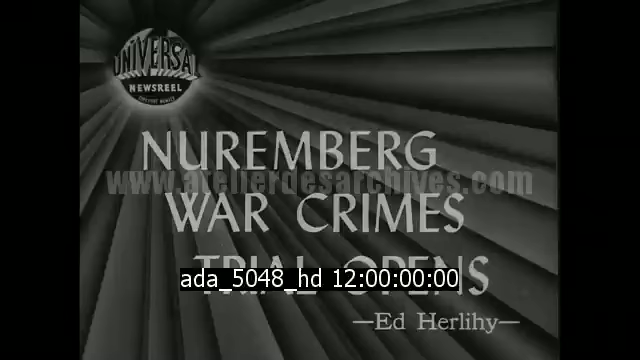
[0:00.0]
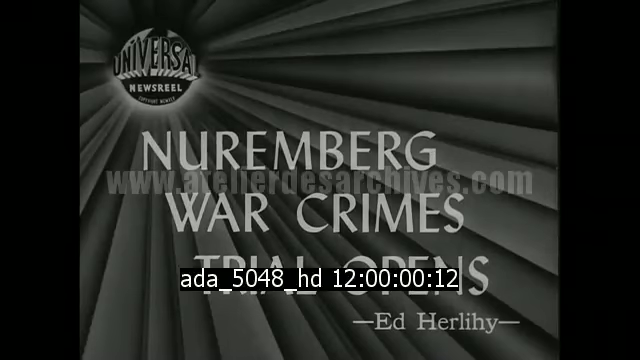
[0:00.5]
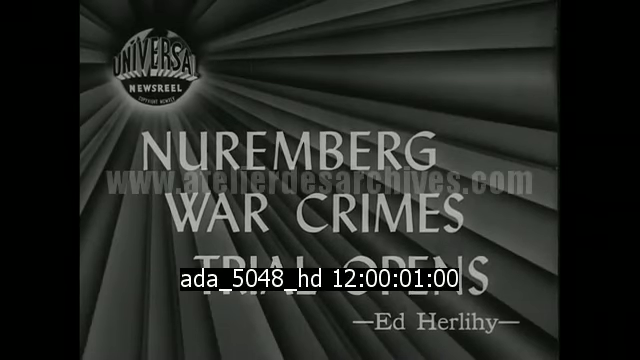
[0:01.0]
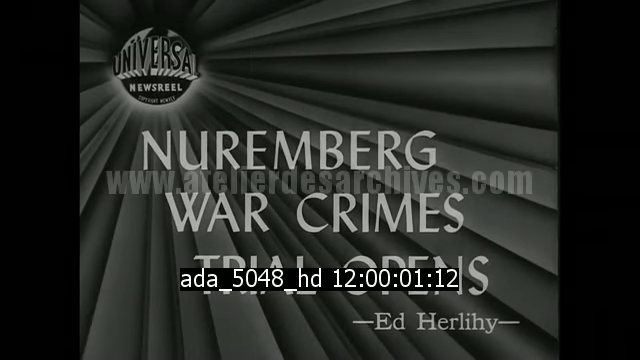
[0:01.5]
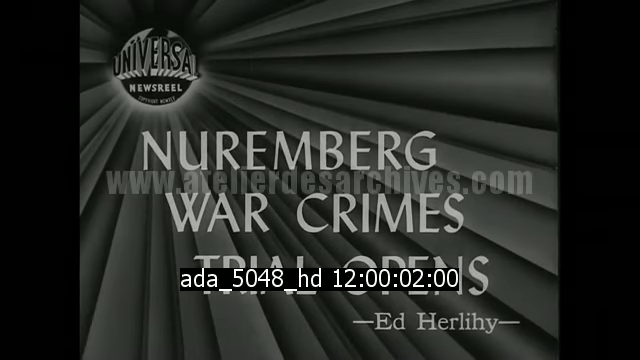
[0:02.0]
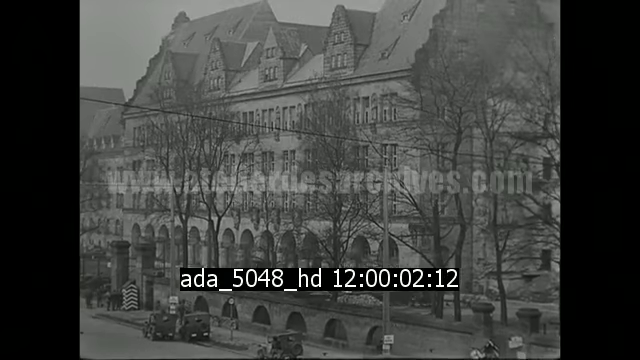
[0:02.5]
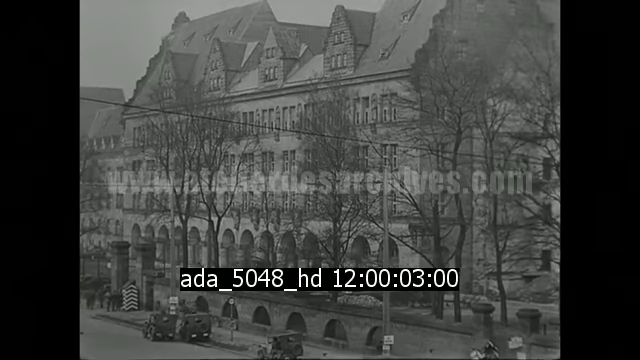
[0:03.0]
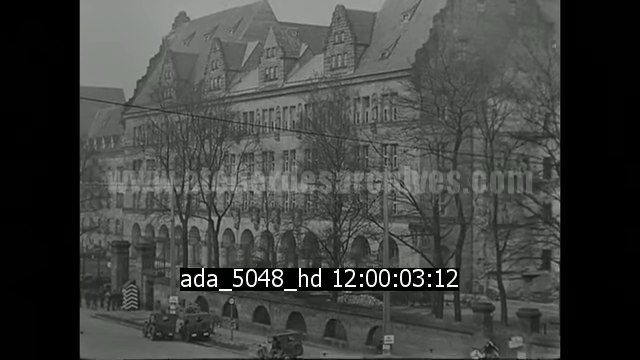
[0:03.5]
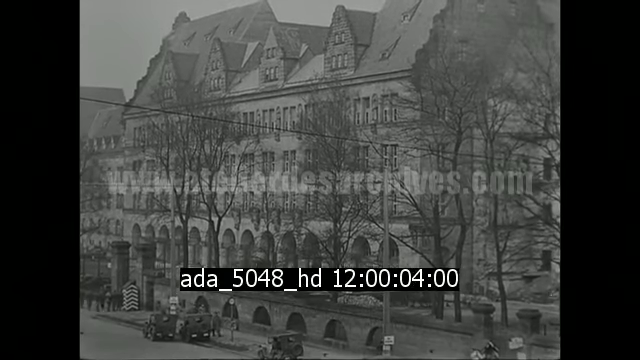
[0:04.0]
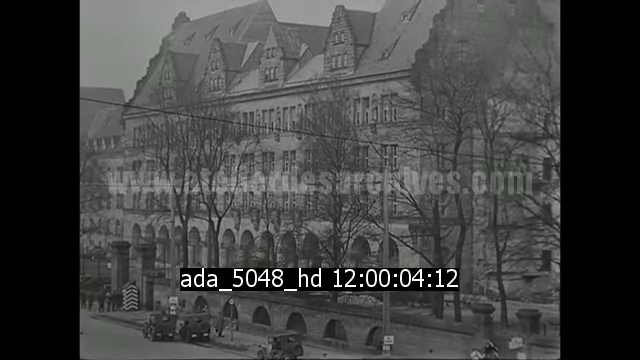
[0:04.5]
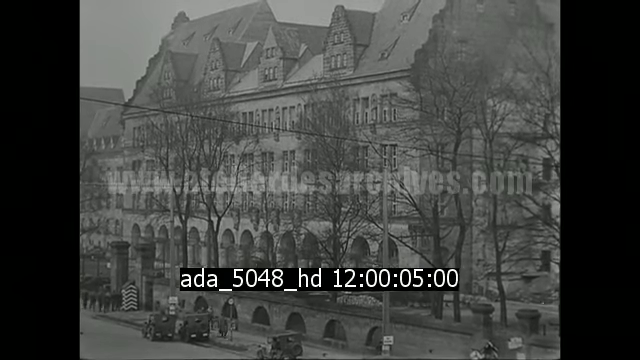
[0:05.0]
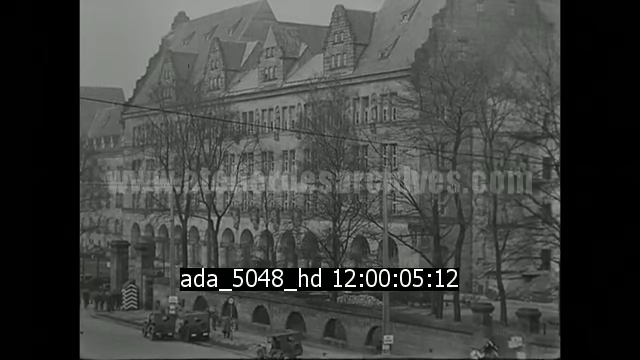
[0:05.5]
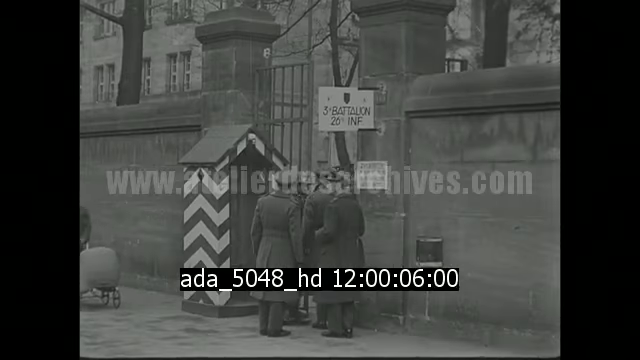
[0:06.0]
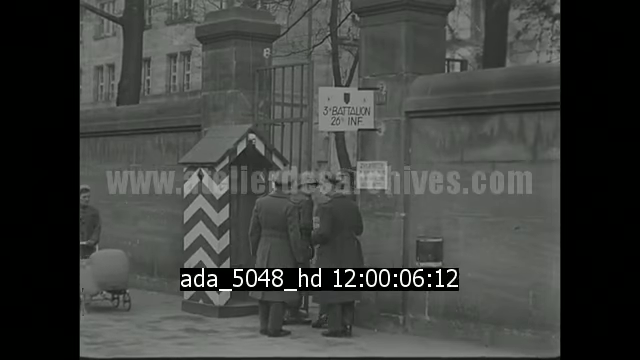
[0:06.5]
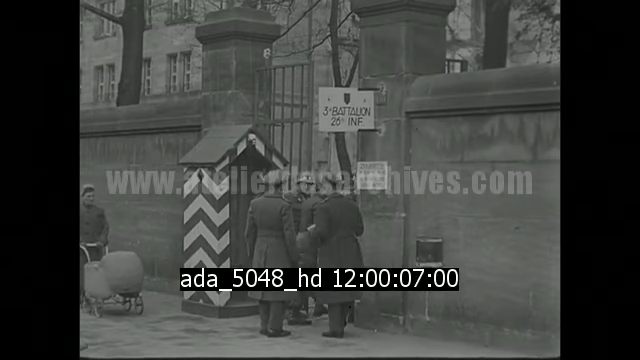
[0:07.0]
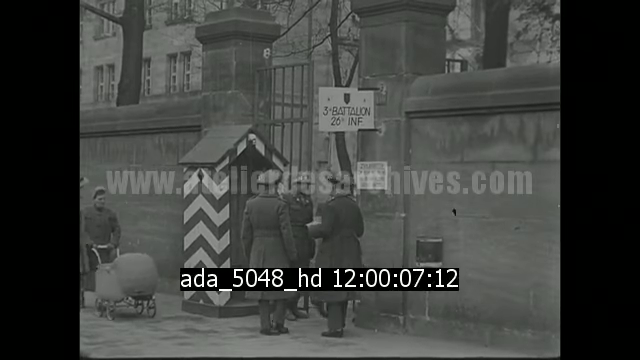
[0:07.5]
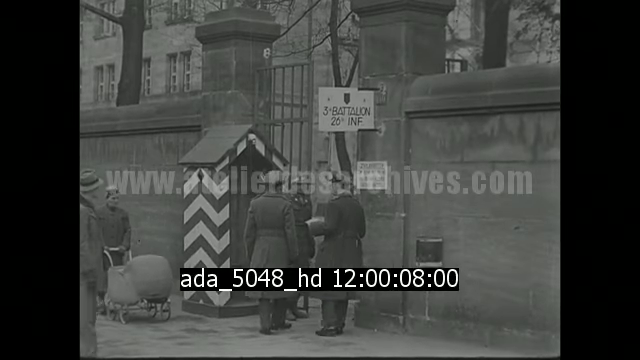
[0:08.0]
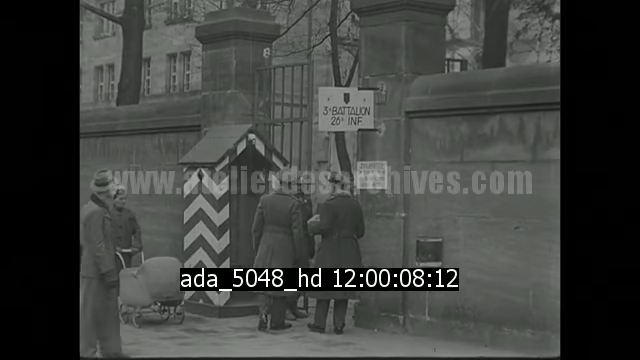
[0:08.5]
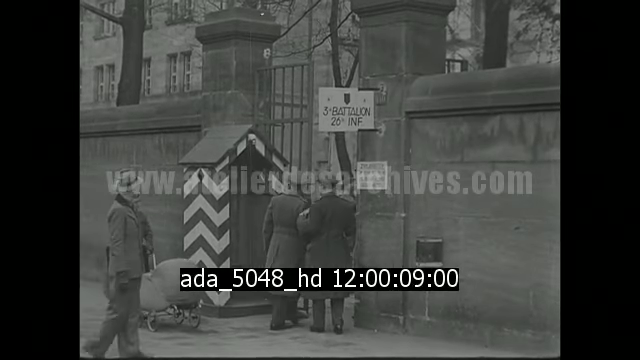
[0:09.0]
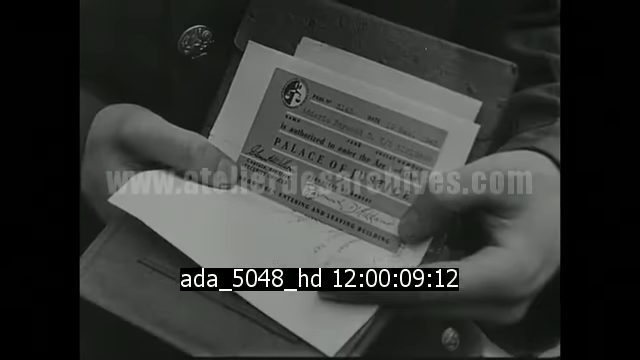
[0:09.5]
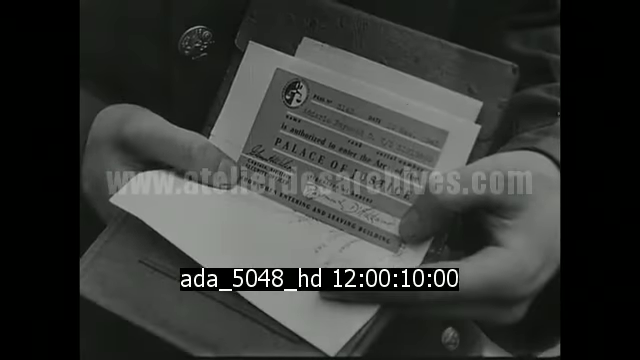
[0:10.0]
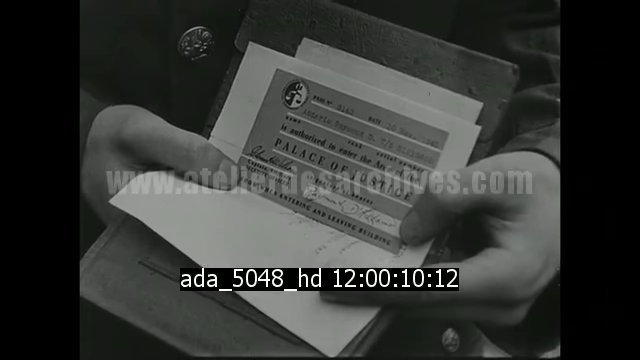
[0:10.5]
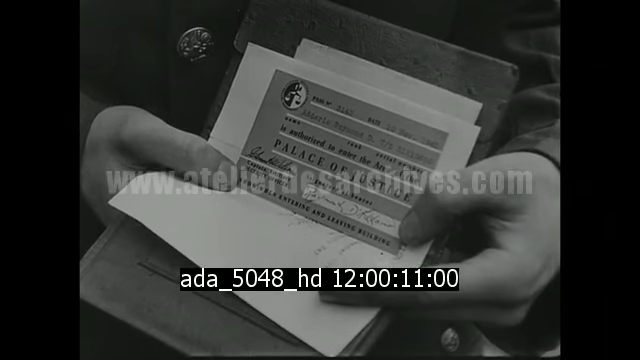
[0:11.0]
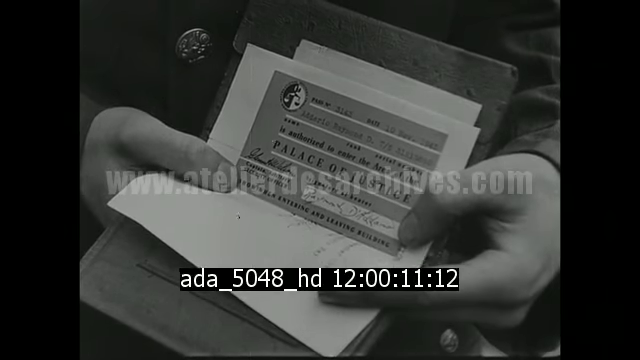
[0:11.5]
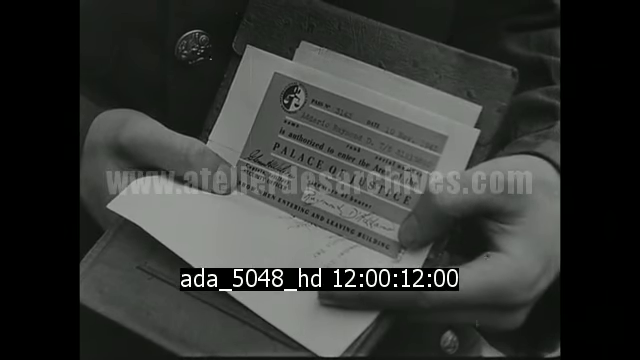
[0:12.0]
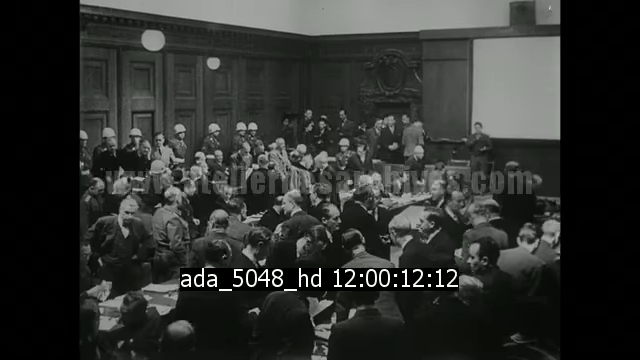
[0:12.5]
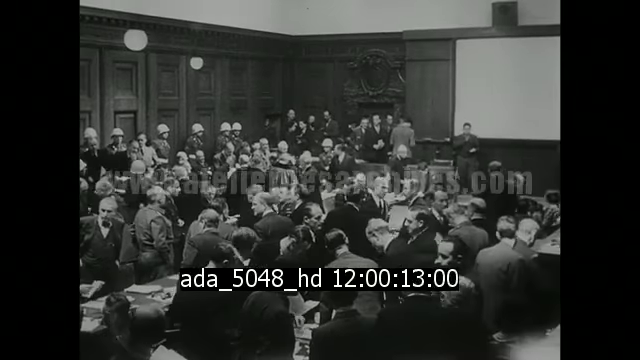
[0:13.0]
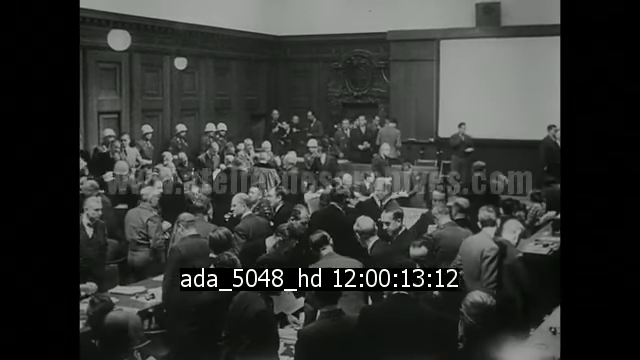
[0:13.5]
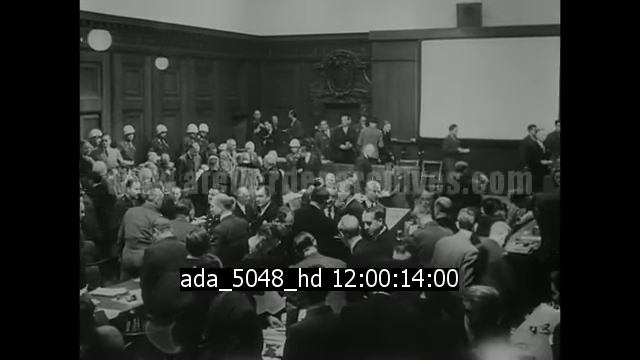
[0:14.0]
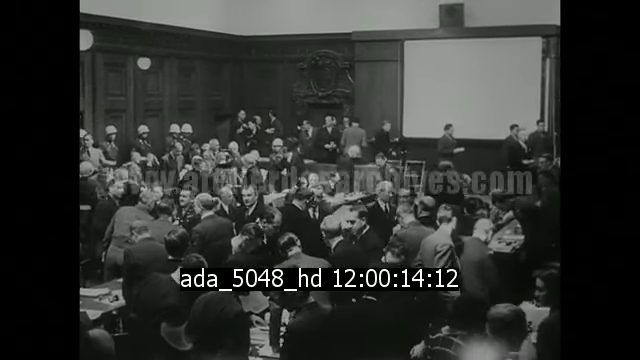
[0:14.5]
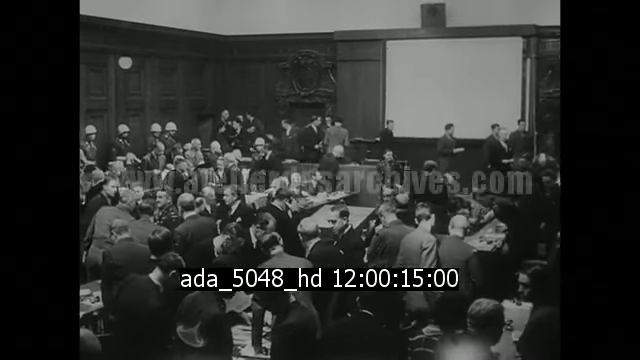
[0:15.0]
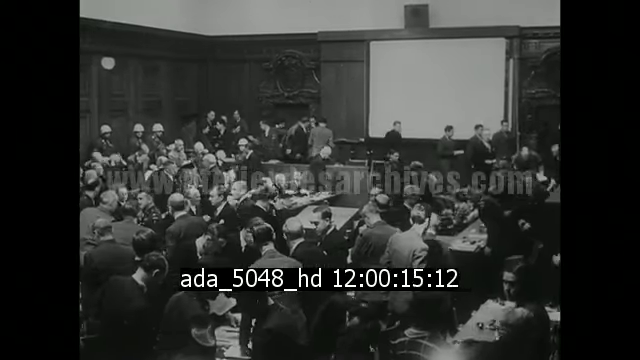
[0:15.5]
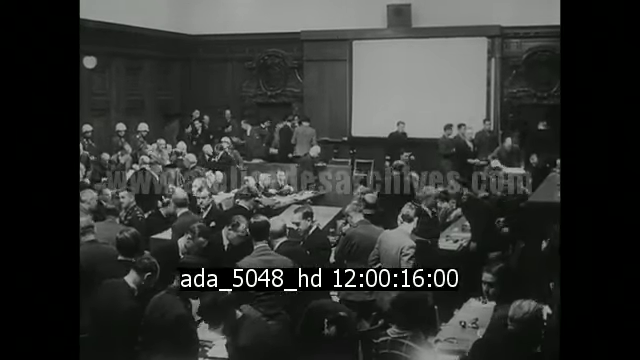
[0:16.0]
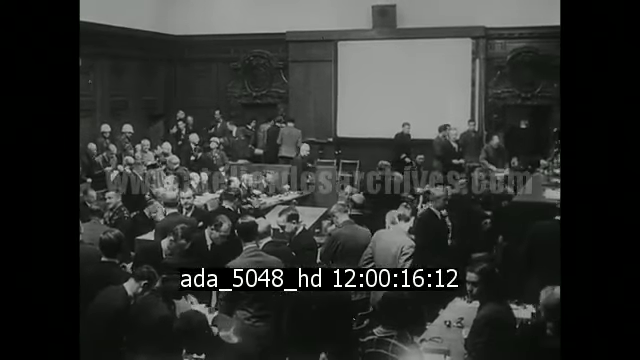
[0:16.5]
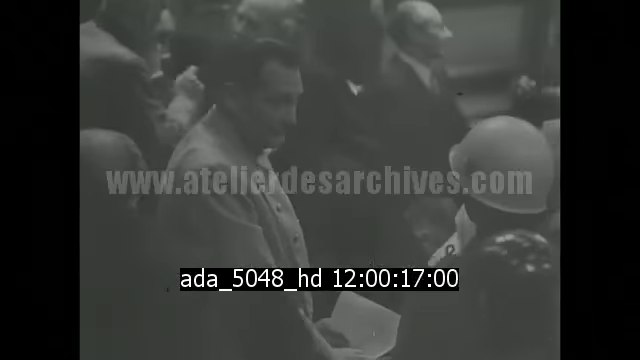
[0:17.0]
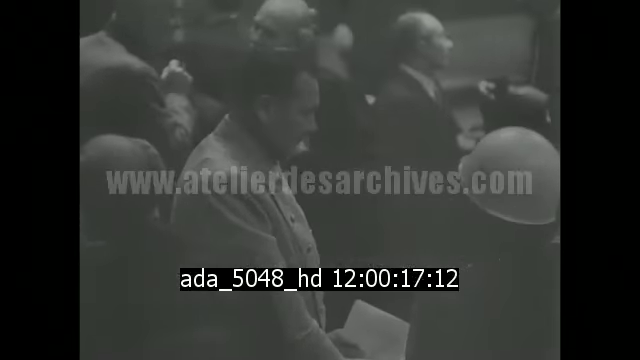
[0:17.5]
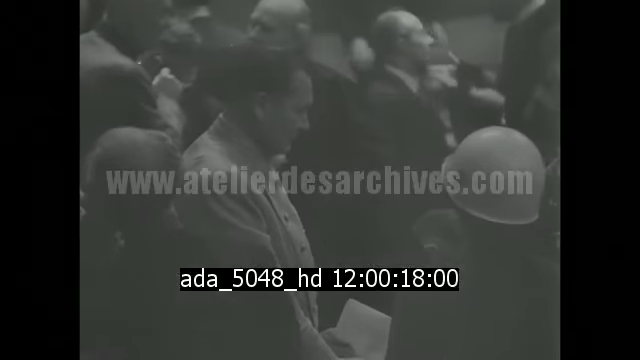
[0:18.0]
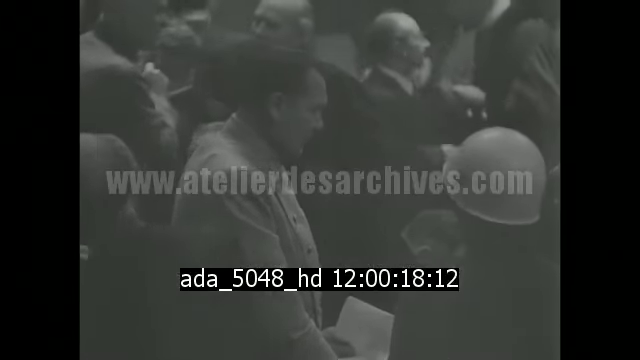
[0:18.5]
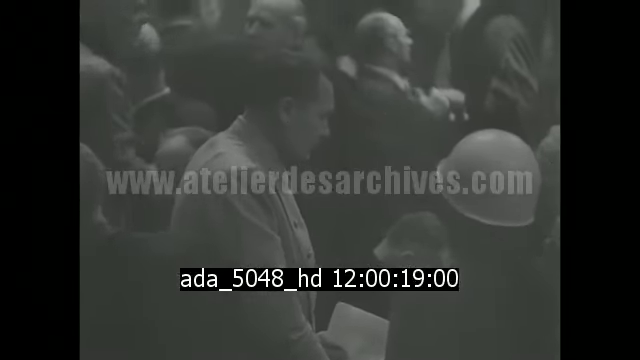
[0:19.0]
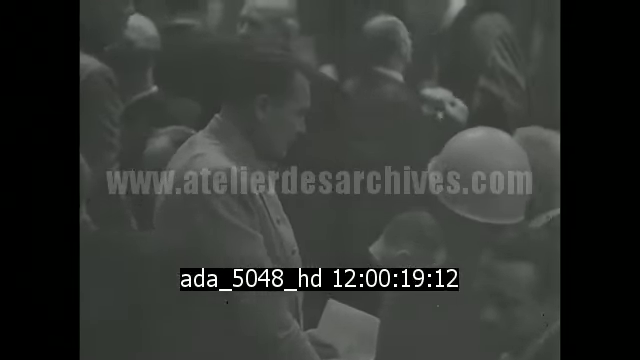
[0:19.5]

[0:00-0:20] The footage is completely black and white. People are holding up their IDs, and many soldiers are gathered in the area. Soldiers are shown in a court, along with many bystanders wearing various types of clothing. There is a fancy building, and a gated fence separates the people on the outside from the people on the inside.